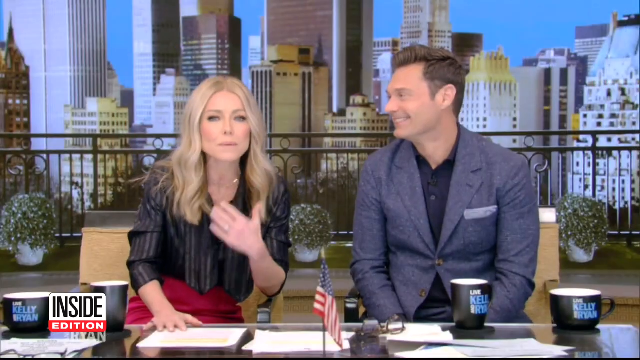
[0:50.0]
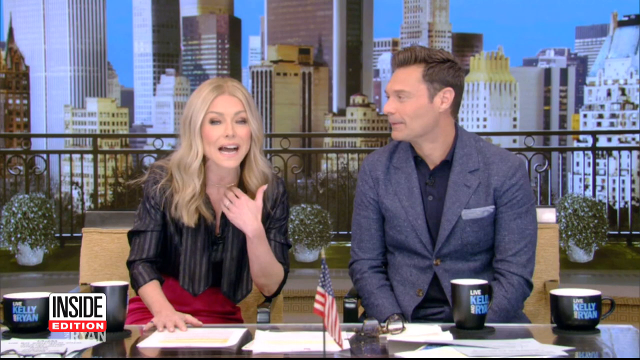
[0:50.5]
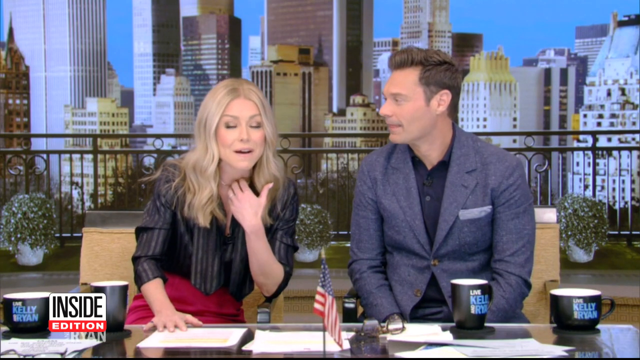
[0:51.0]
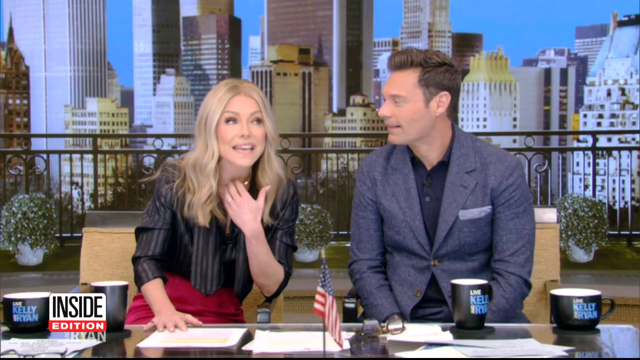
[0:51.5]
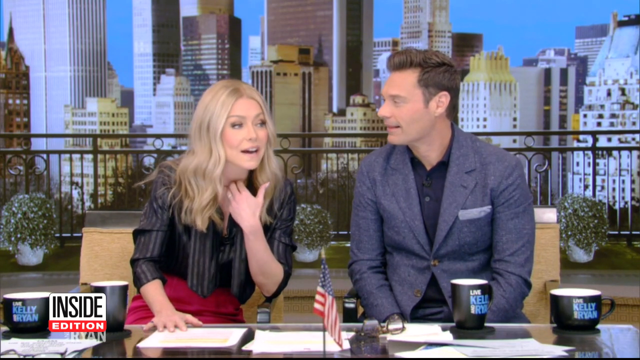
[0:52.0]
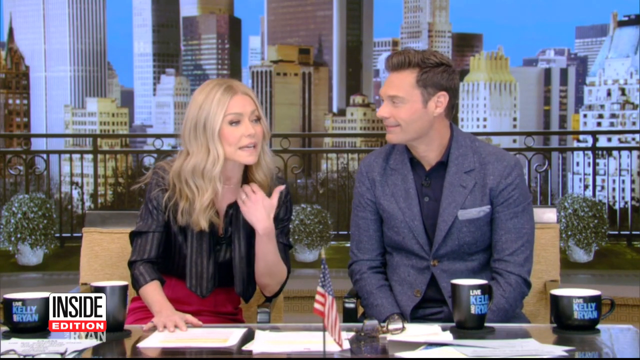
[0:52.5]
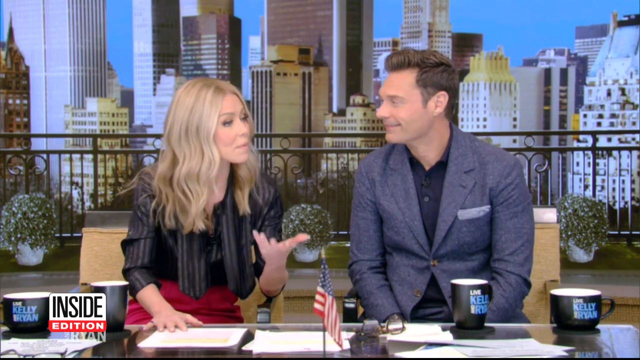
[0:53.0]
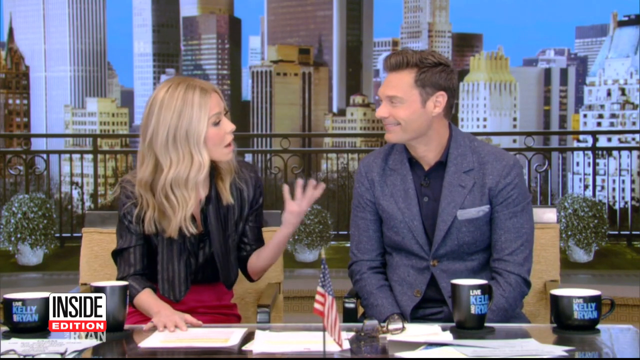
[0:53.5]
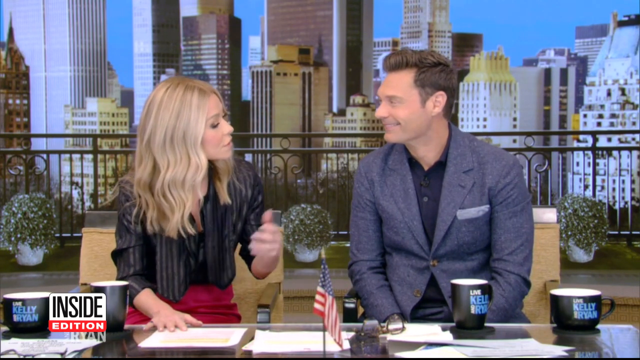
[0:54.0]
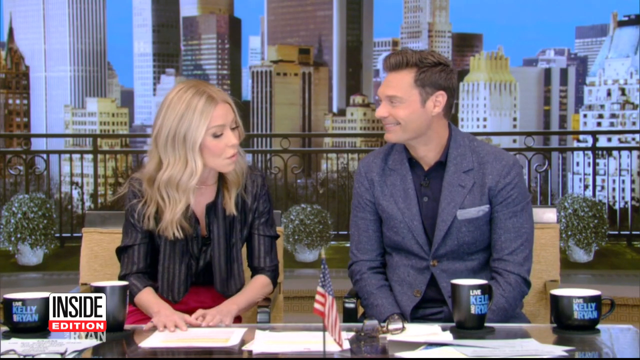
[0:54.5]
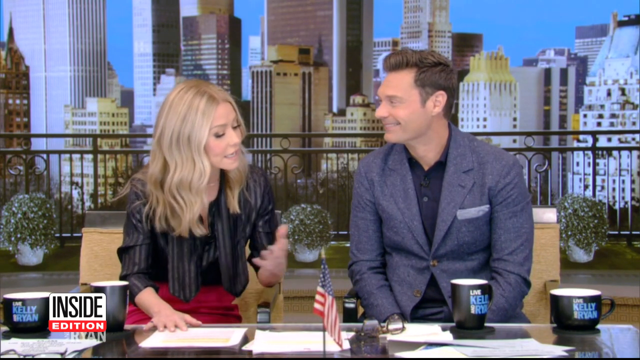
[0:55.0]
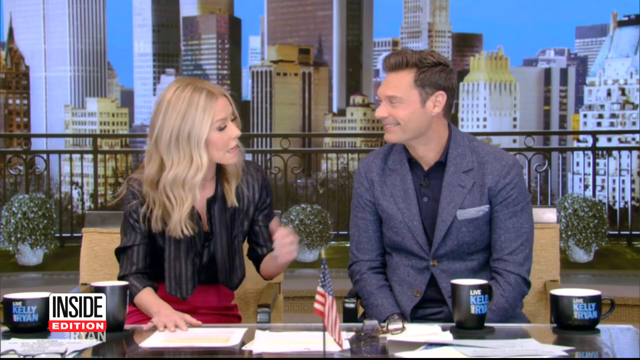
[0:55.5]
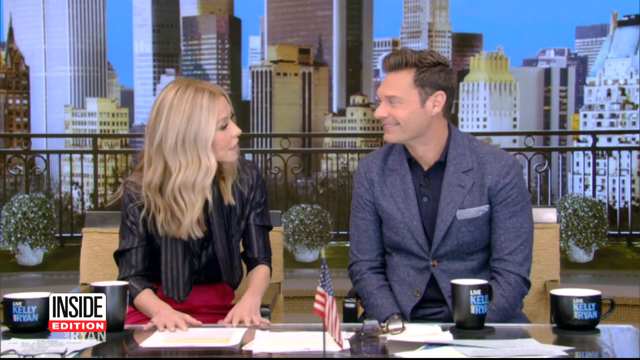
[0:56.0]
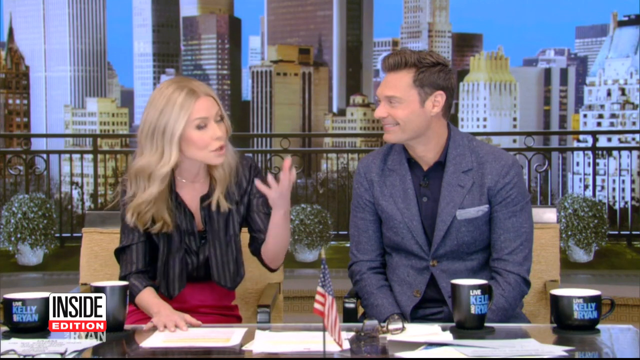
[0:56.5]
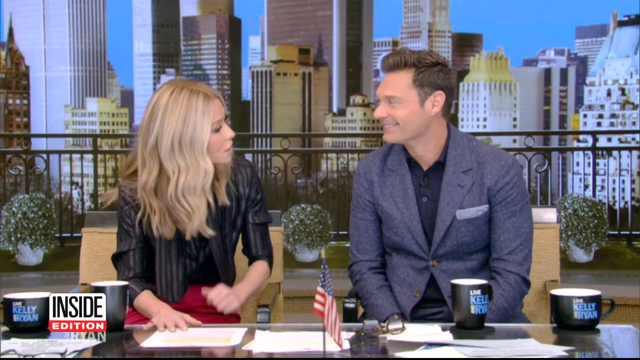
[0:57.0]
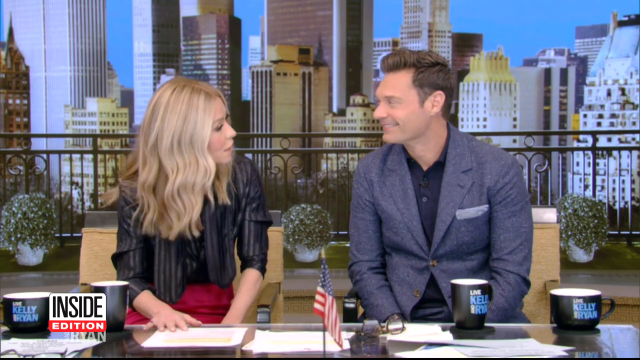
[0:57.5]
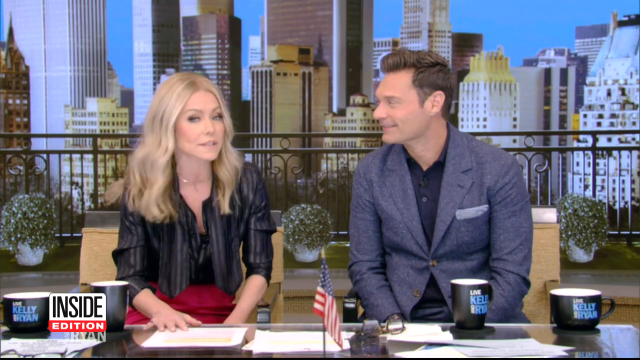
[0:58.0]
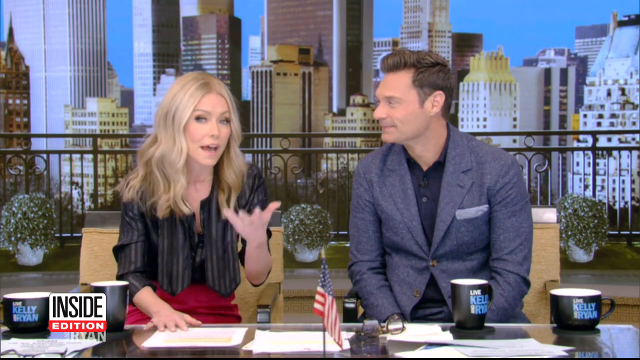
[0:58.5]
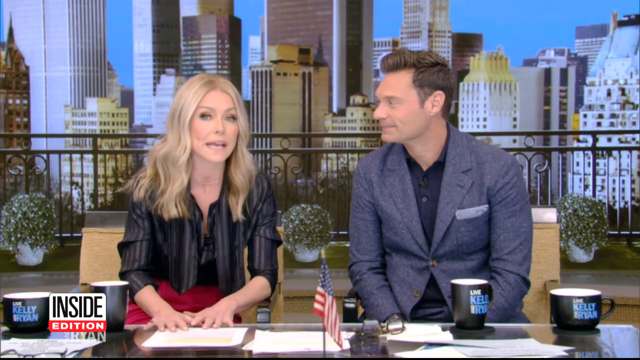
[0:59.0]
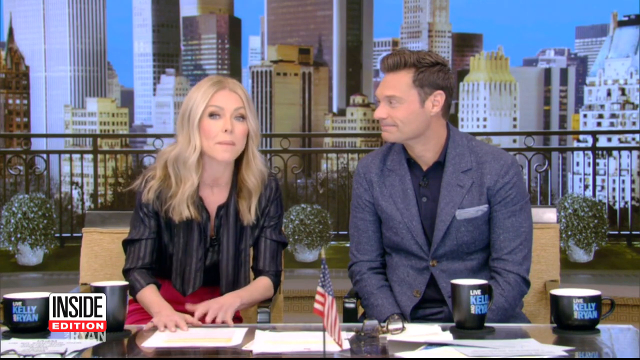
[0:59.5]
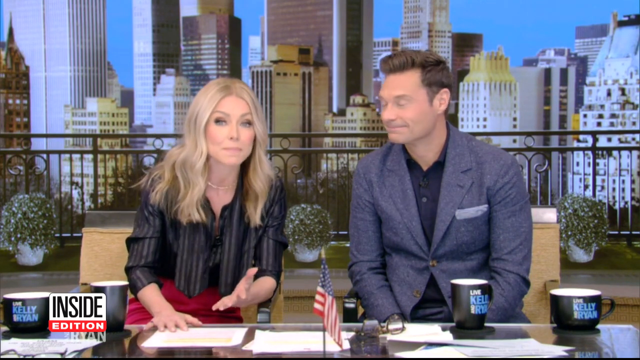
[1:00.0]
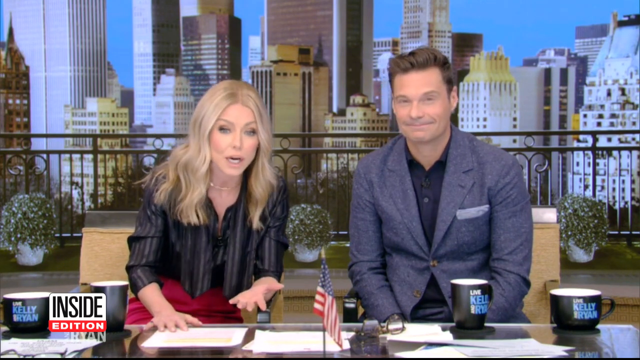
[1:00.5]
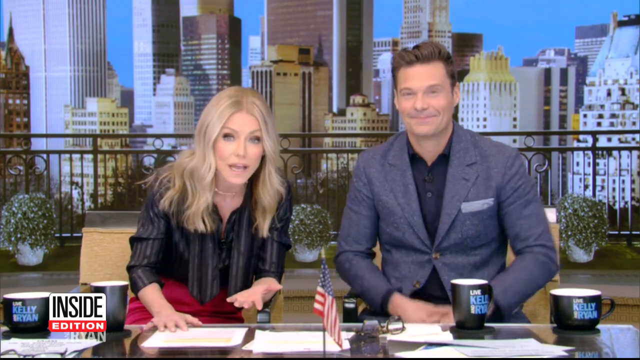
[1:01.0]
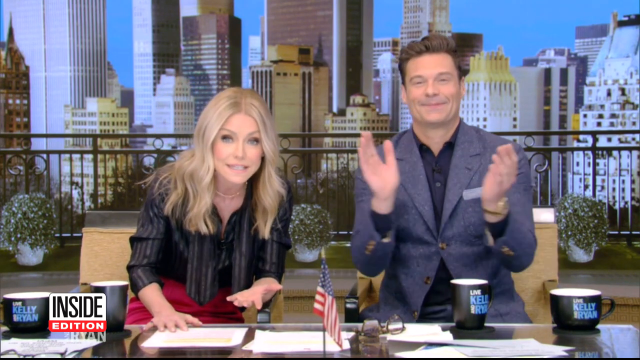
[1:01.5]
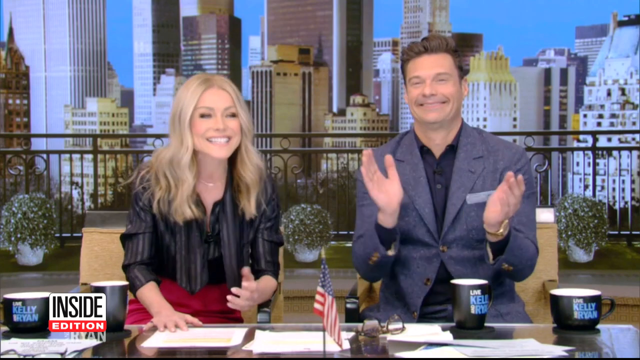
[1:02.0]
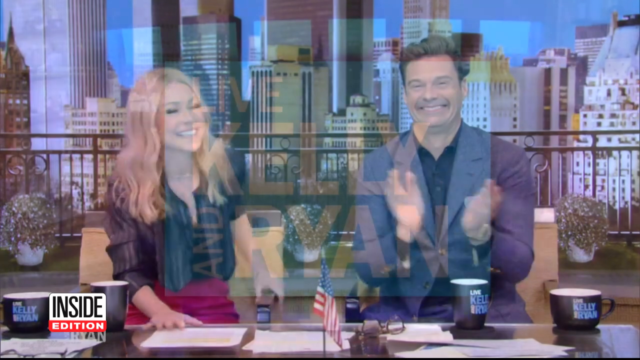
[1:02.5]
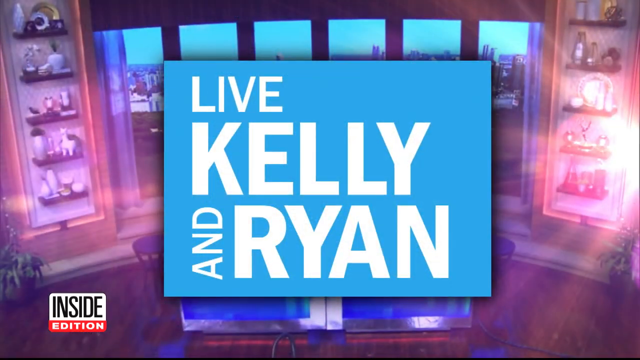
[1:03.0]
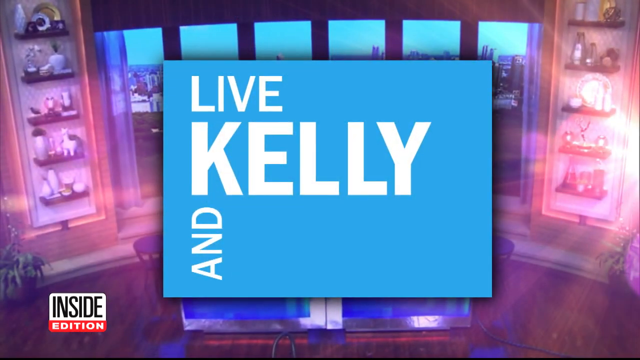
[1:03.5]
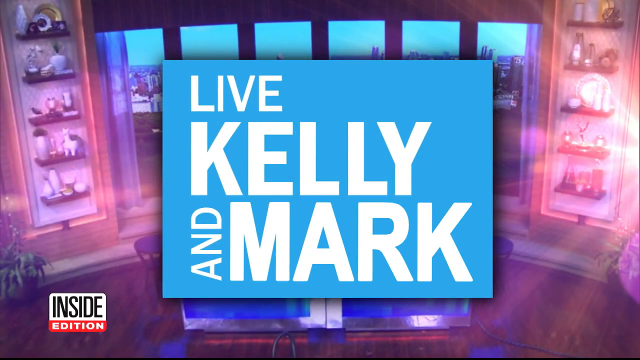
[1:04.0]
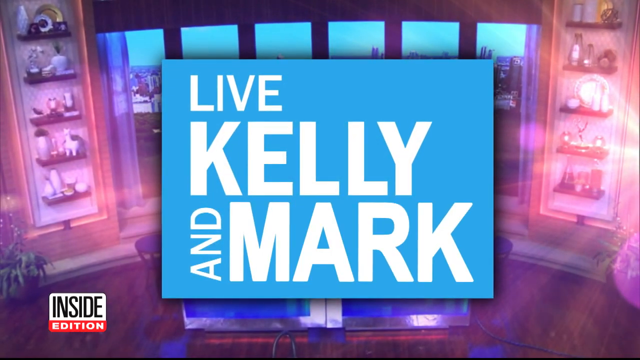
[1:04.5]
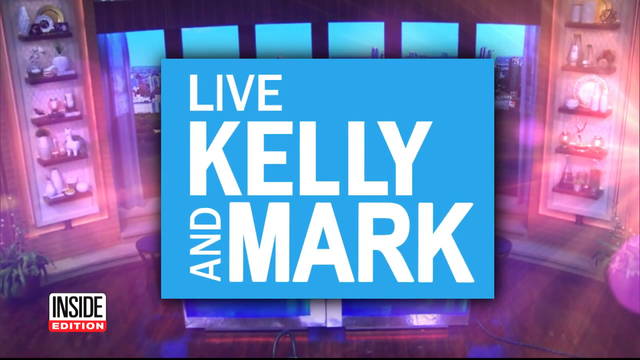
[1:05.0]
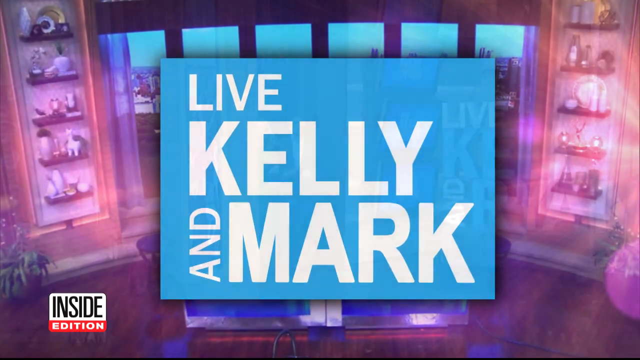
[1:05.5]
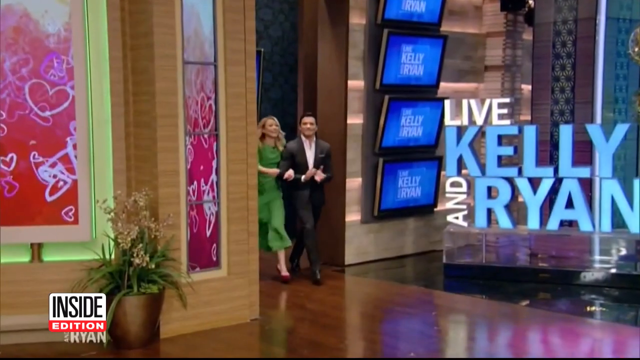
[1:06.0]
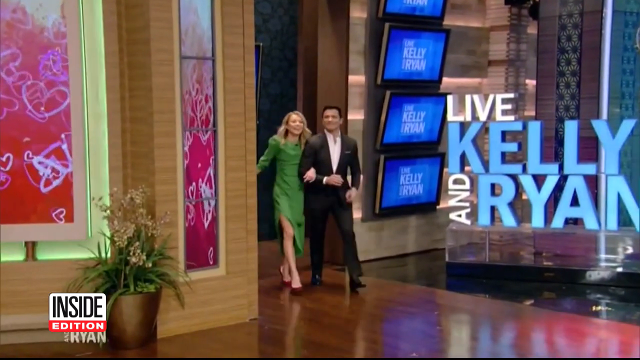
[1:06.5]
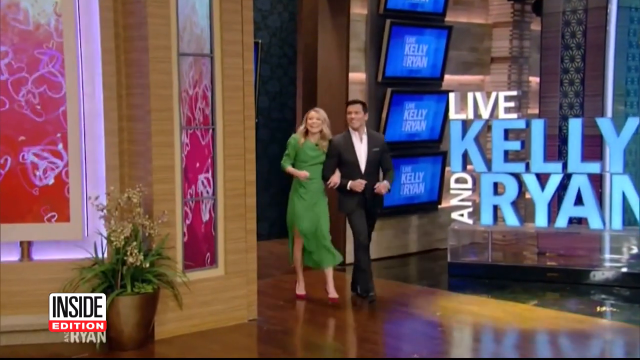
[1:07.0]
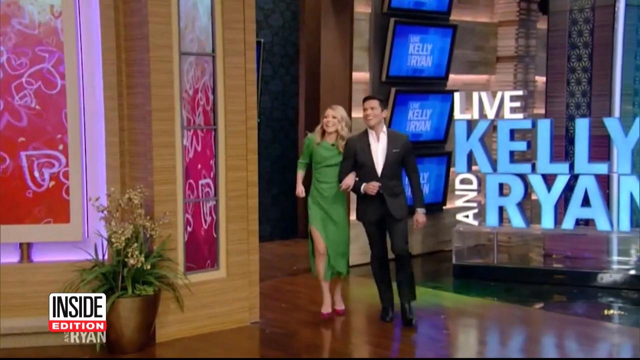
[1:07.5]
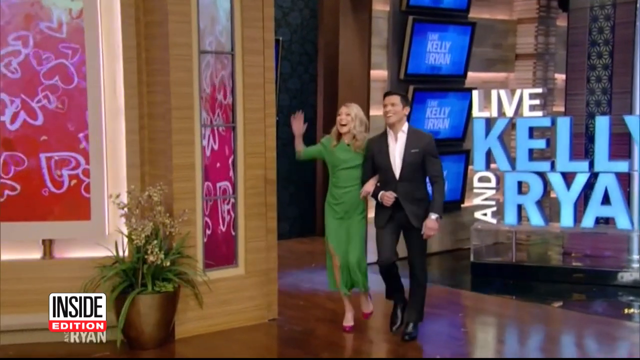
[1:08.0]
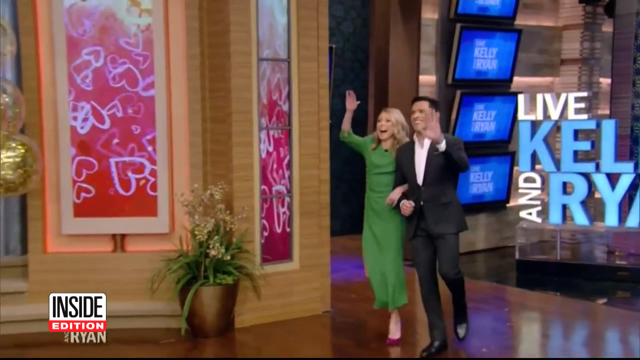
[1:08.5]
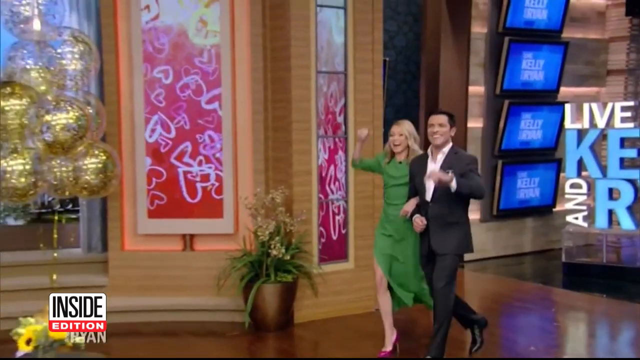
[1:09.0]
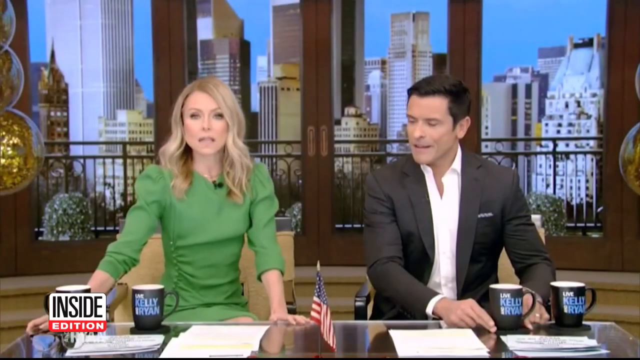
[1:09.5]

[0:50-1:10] Kelly Ripa and Ryan Seacrest sit at a long, seemingly glass desk with several mugs, several pieces of paper, and an American flag on it in front of them. The image behind them now shows a video or digital image of the New York skyline. They speak and smile at one another; Kelly does most of the speaking and gestures with her hands, then Ryan claps. The video cuts to the show's title card, "Live, Kelly and Ryan", which changes to "Live with Kelly and Mark". Next, Kelly Ripa walks onto the set wearing a green dress, accompanied by her husband, Mark Consuelos, who wears a black suit with a white shirt underneath. They wave to the audience, and the two of them are shown sitting at the same desk where Ryan and Kelly sat, with Kelly on the left side of the screen and Mark on the right.